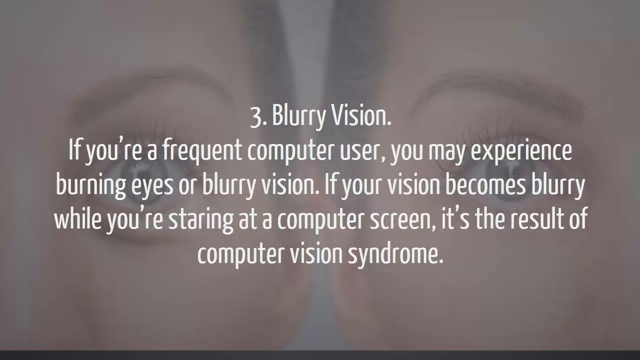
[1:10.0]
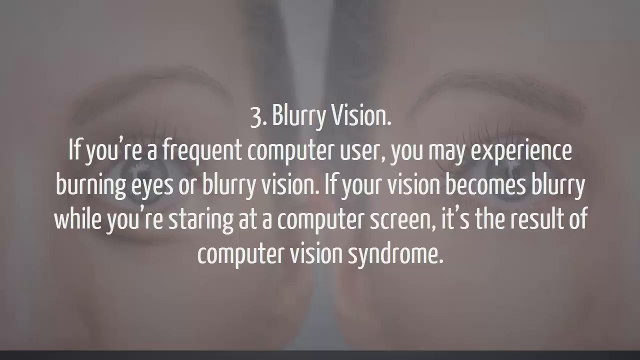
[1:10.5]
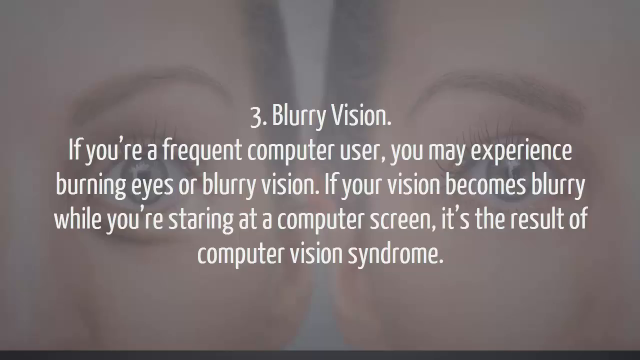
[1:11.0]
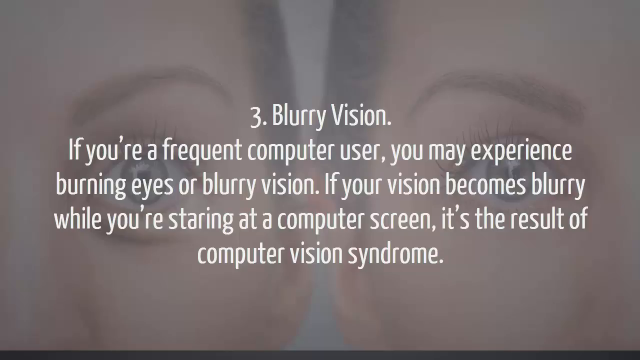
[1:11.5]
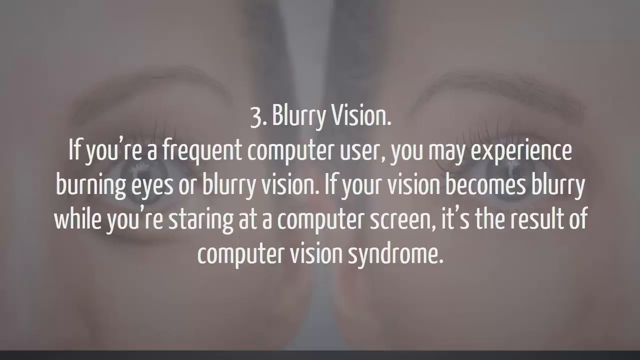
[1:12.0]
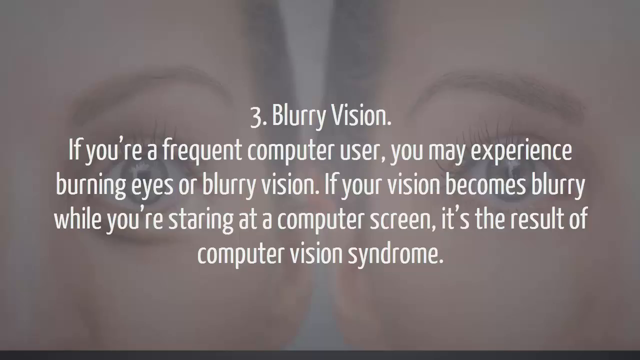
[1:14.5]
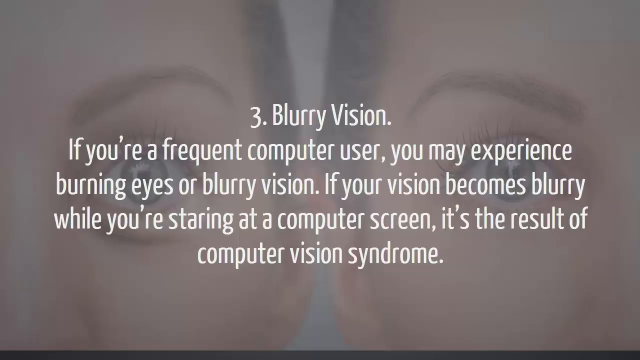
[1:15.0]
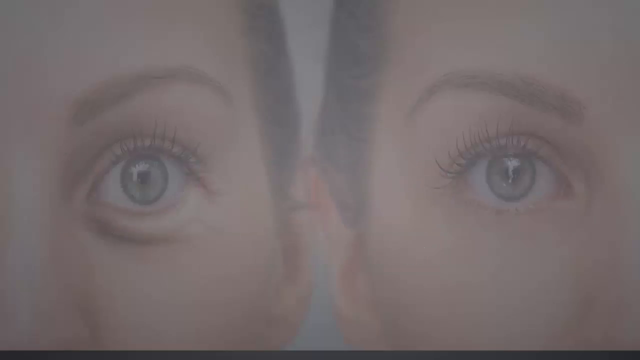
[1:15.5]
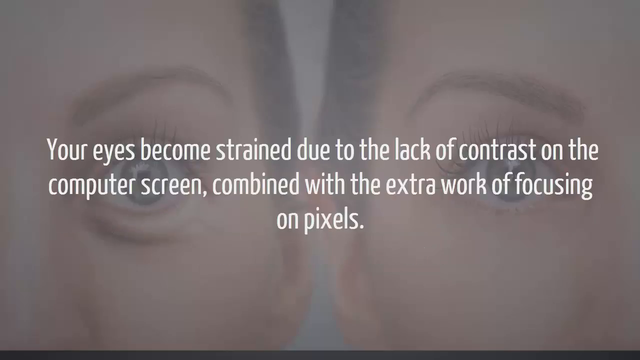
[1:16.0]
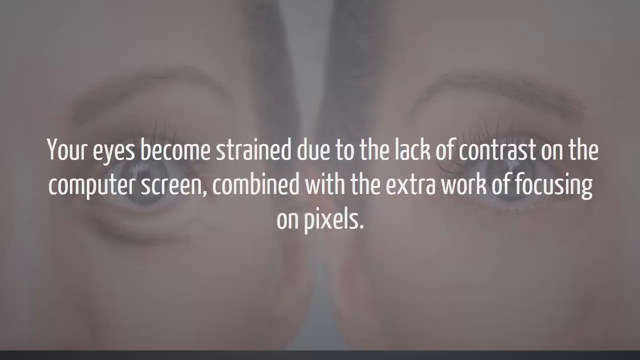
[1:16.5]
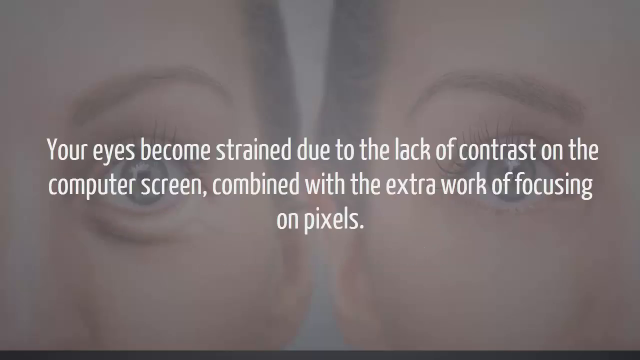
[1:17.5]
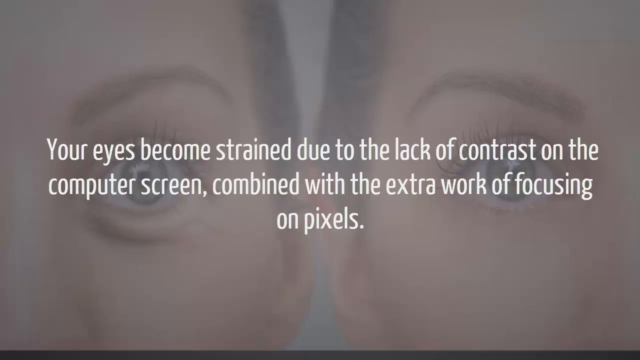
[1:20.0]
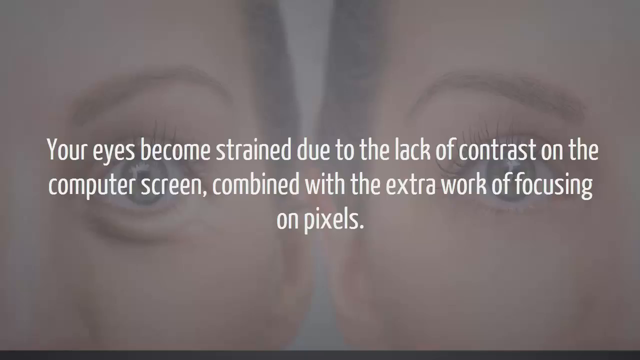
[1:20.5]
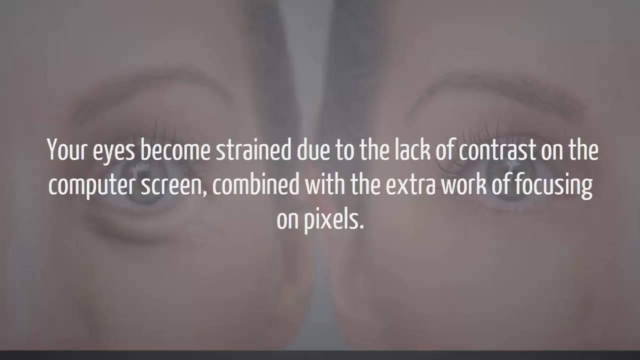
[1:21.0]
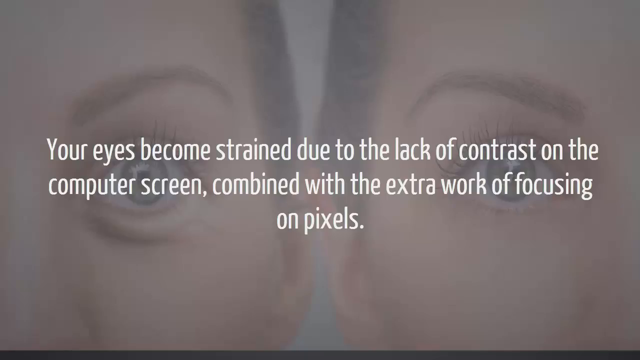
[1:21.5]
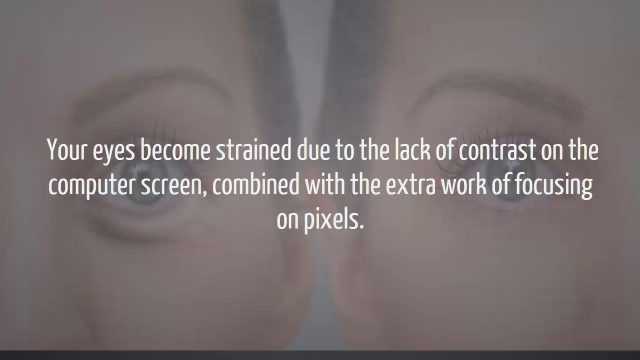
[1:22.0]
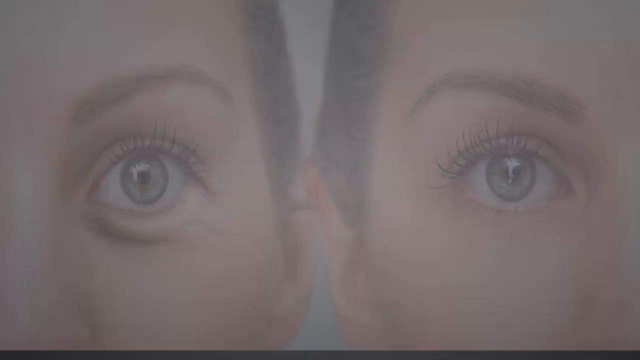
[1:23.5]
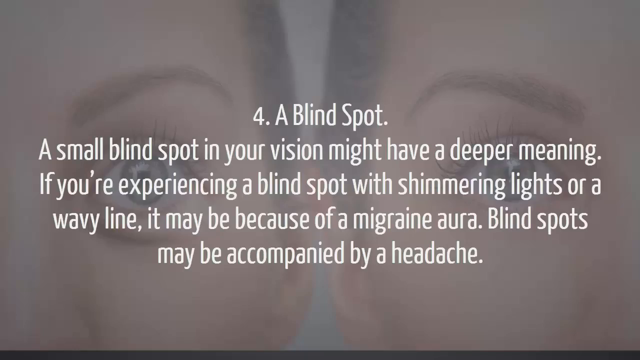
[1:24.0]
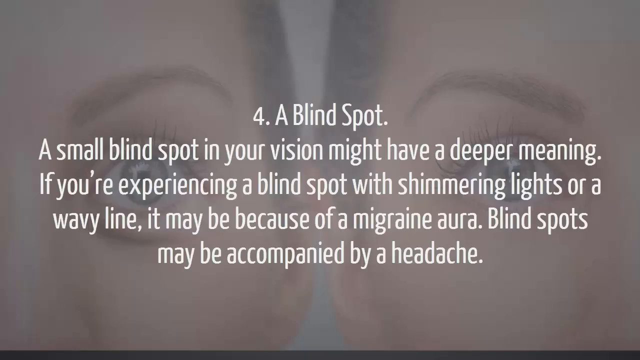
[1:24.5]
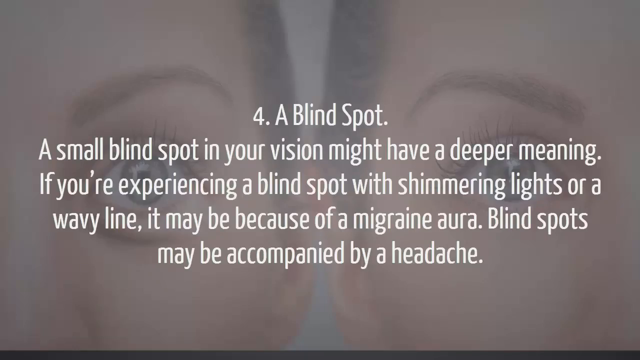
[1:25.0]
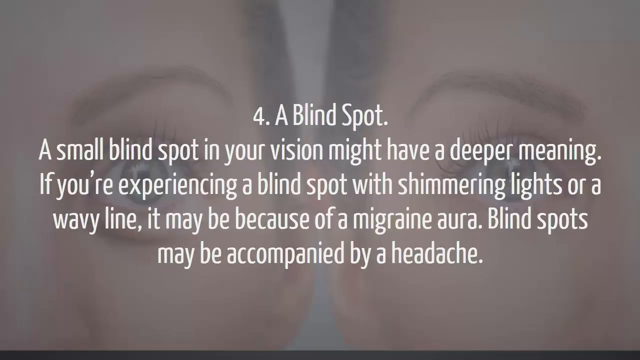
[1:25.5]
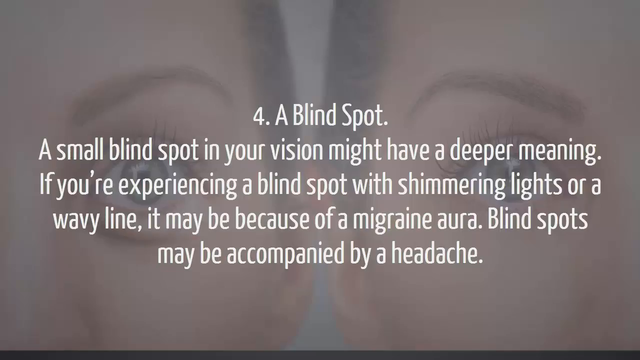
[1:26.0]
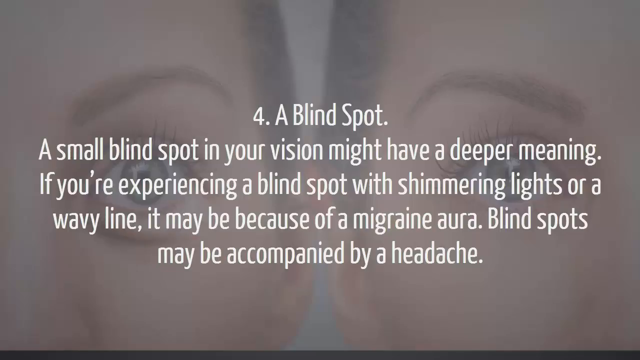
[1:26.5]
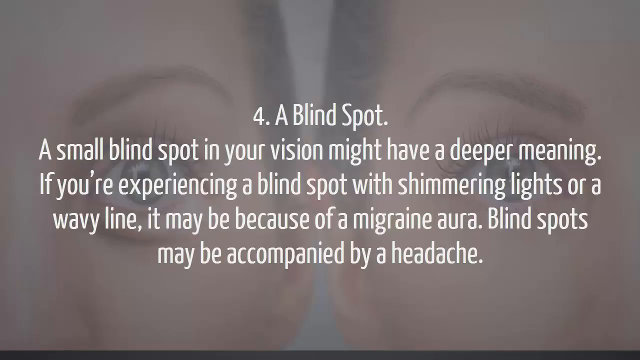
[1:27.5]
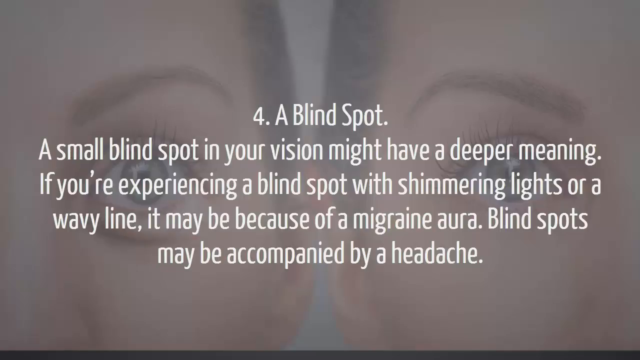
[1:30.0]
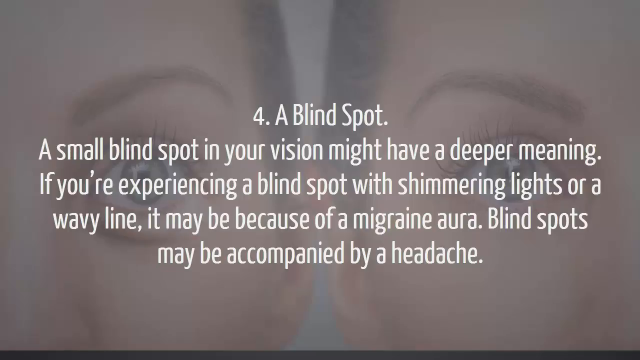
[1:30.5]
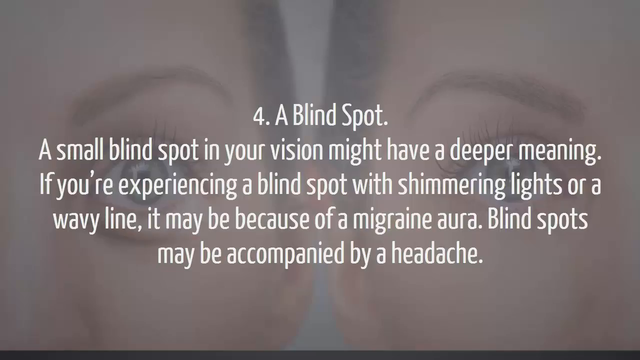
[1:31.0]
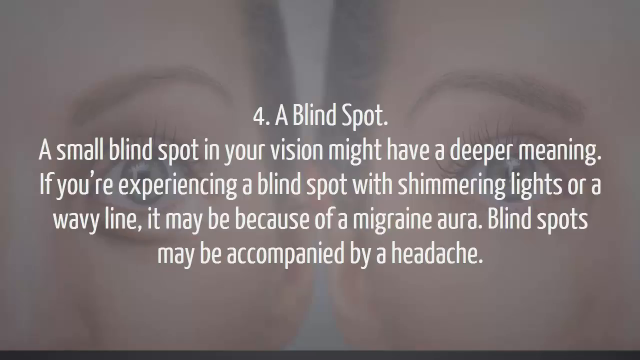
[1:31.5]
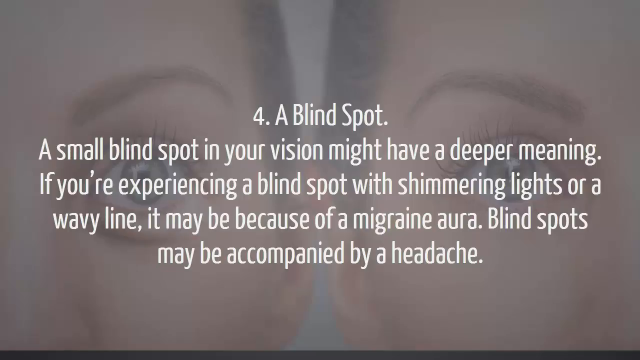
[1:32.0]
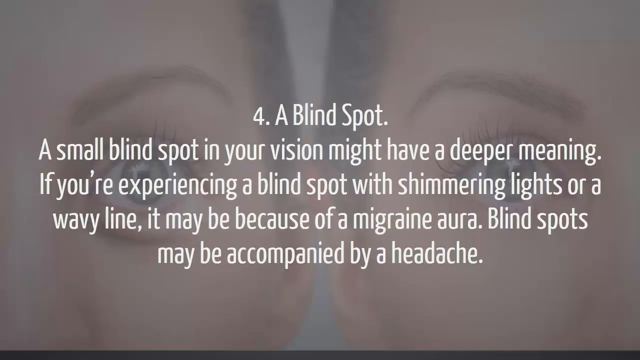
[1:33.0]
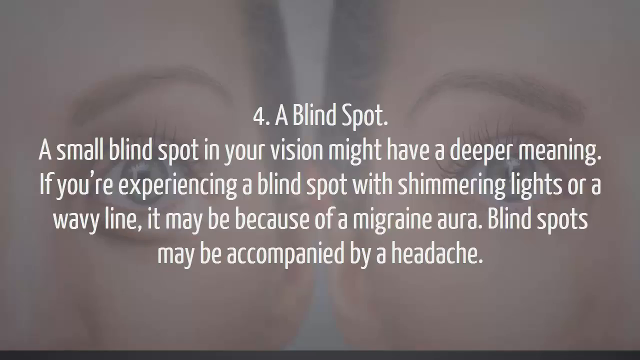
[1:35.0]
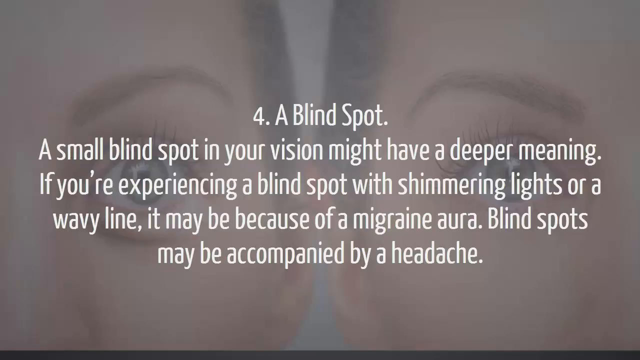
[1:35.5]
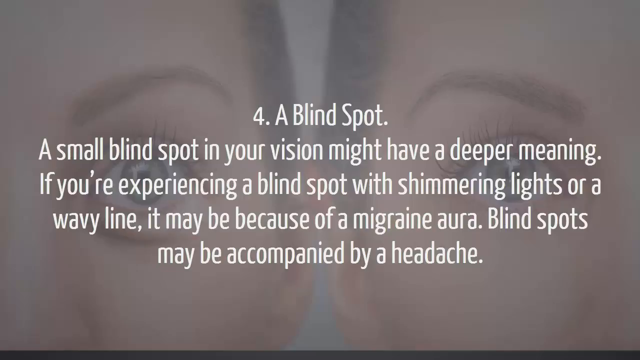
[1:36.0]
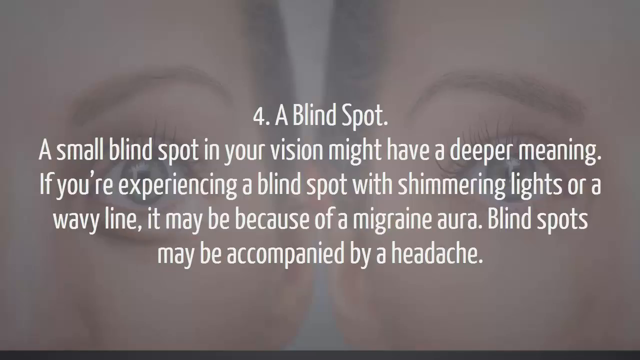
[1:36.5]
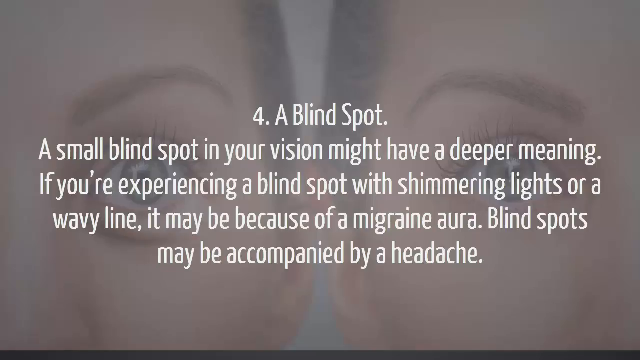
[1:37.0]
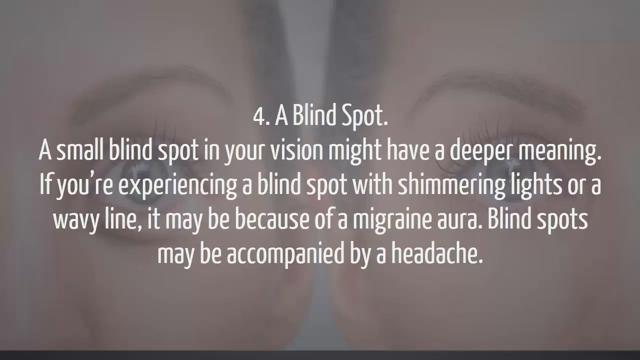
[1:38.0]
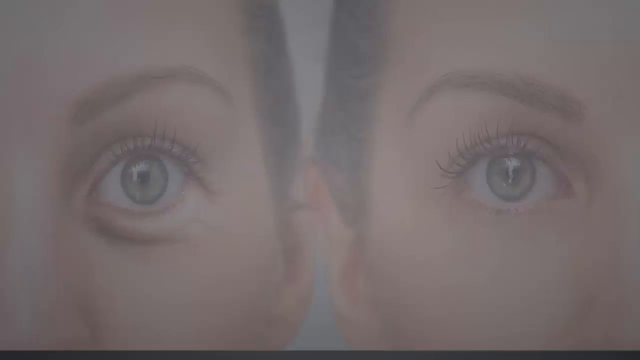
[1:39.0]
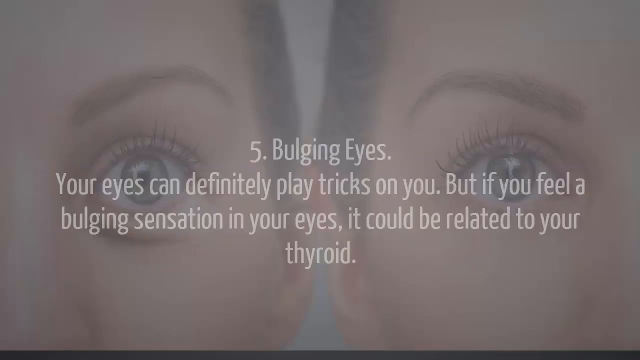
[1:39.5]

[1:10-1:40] A number three appears on the screen with text reading: "Three, blurry vision. If you're a frequent computer user, you may experience burning eyes or blurry vision. If your vision becomes blurry while you're staring at a computer screen, it's the result of computer vision syndrome." The next part of the text reads: "Your eyes become strained due to the lack of contrast on the computer screen, combined with the extra work of focusing on pixels." Then number four comes up: "Four, a blind spot. A small blind spot in your vision might have a deeper meaning. If you're experiencing a blind spot with shimmering lights or a wavy line, it may be because of a migraine aura. Blind spots may be accompanied by a headache."